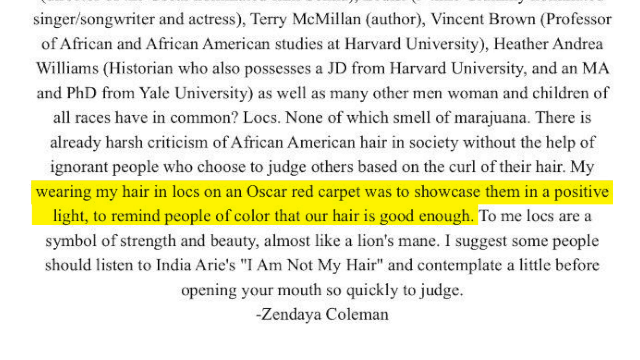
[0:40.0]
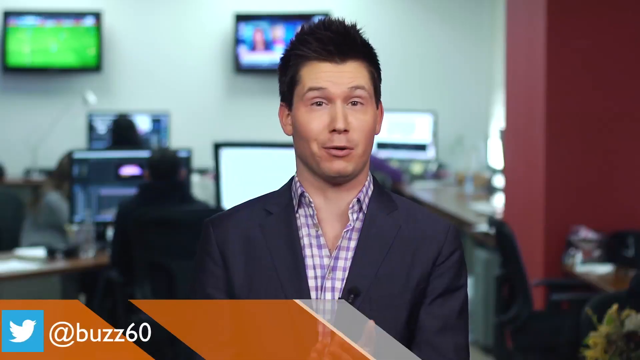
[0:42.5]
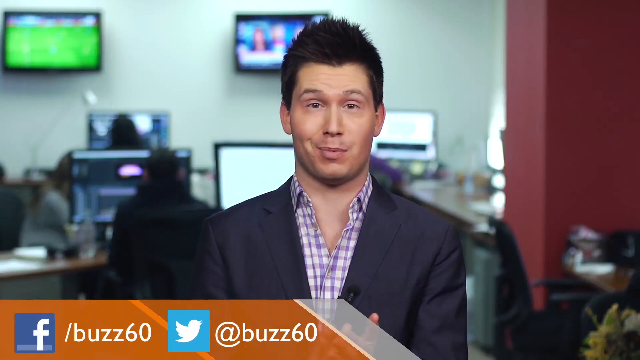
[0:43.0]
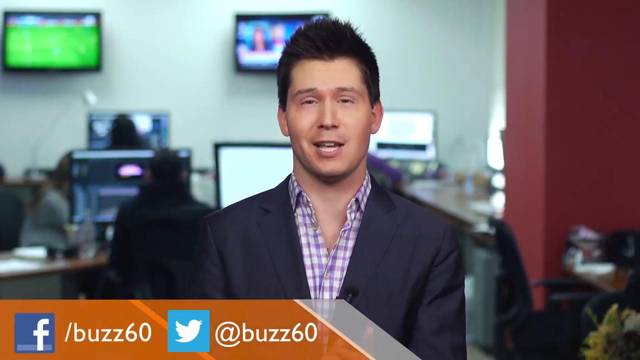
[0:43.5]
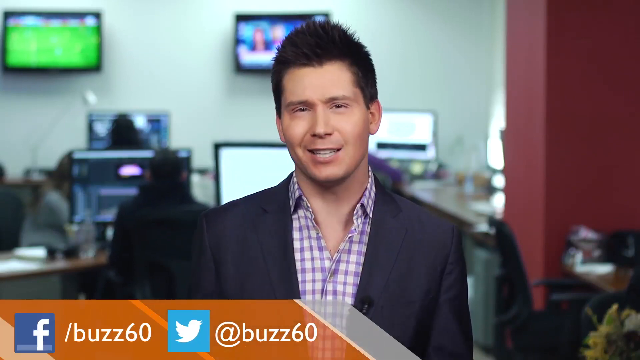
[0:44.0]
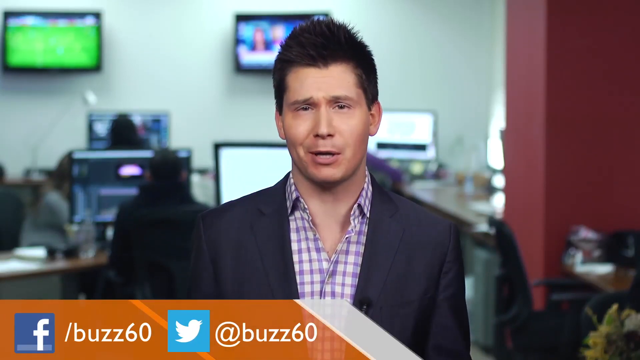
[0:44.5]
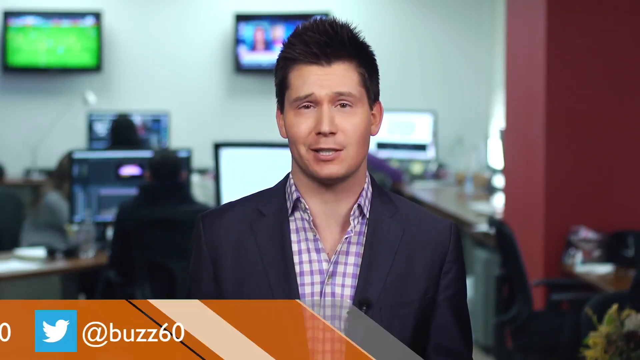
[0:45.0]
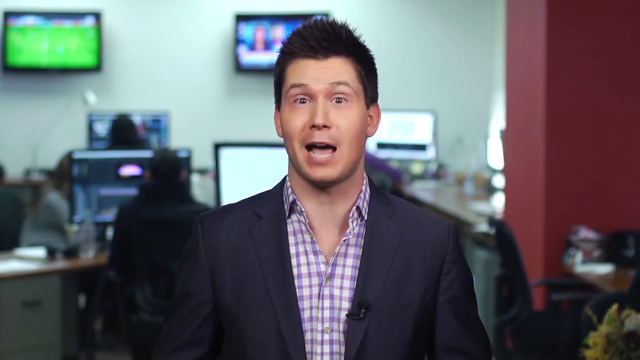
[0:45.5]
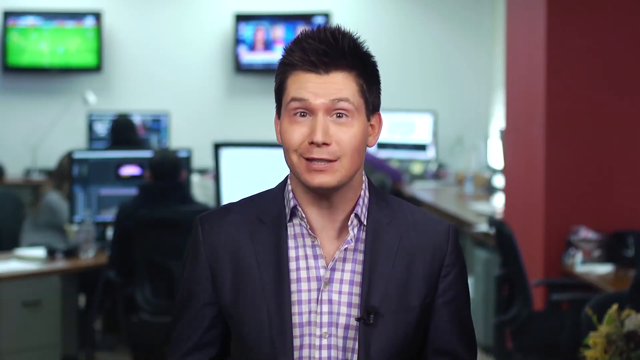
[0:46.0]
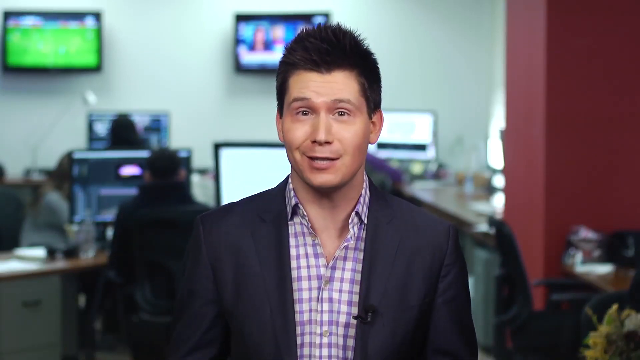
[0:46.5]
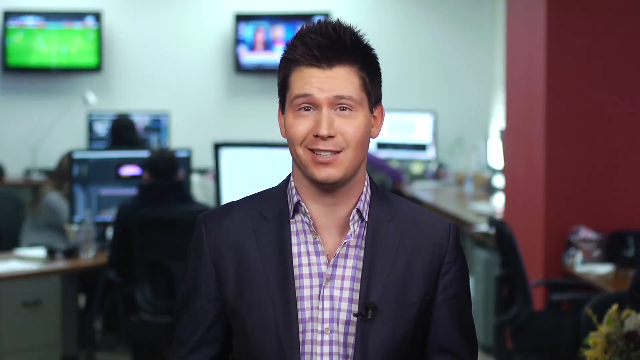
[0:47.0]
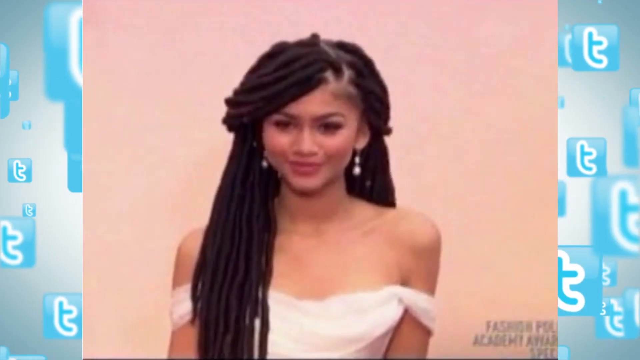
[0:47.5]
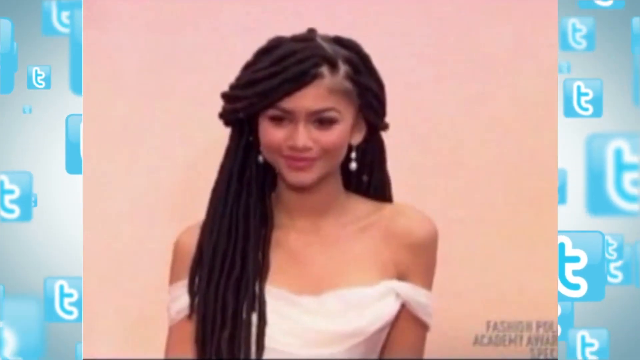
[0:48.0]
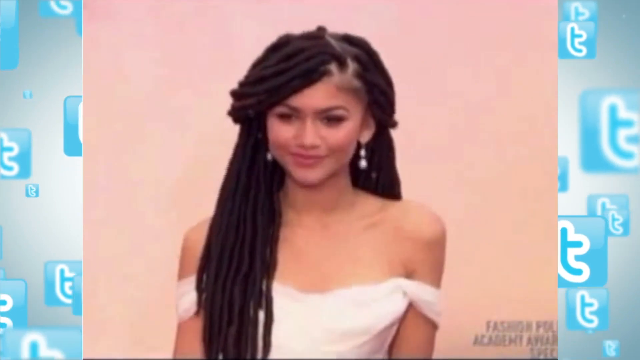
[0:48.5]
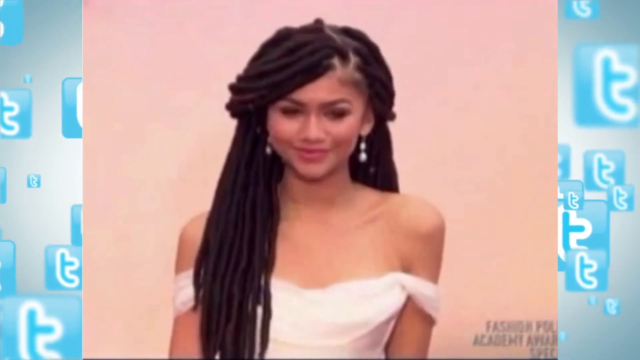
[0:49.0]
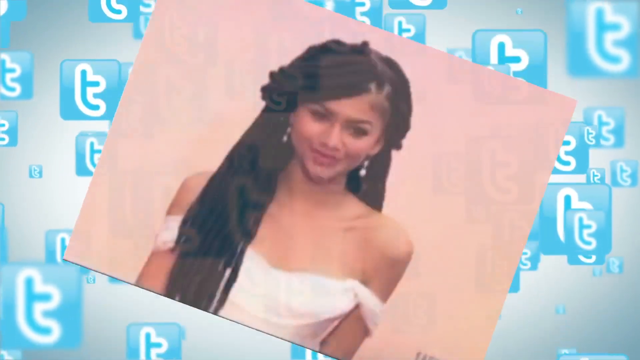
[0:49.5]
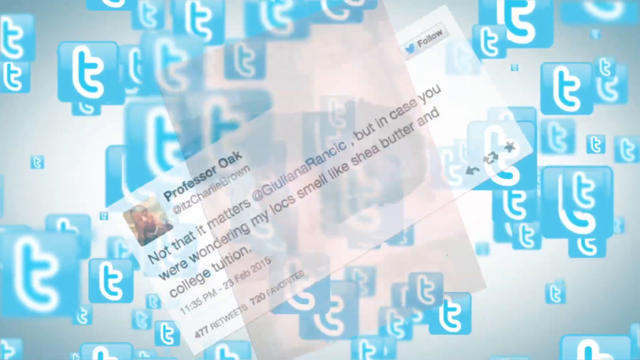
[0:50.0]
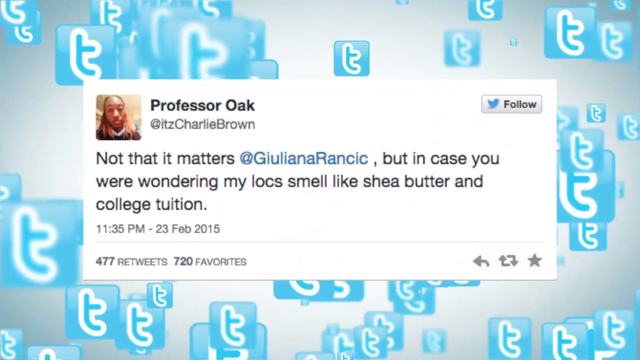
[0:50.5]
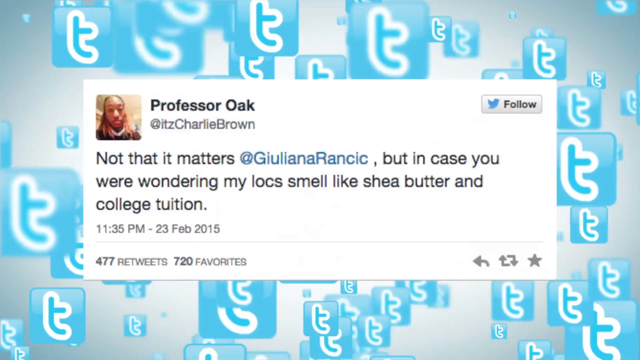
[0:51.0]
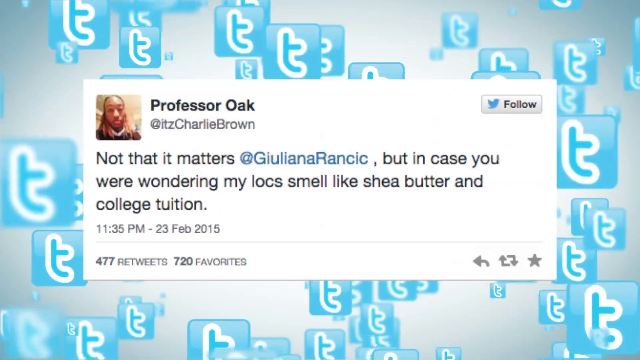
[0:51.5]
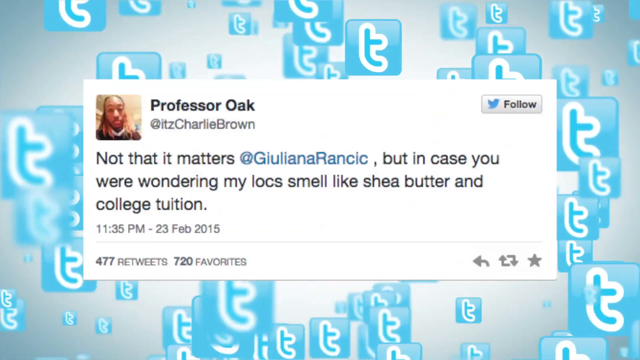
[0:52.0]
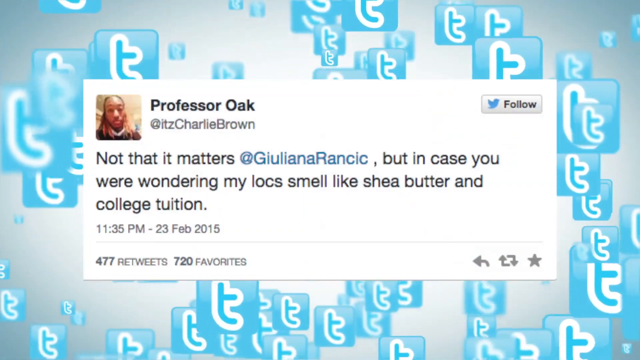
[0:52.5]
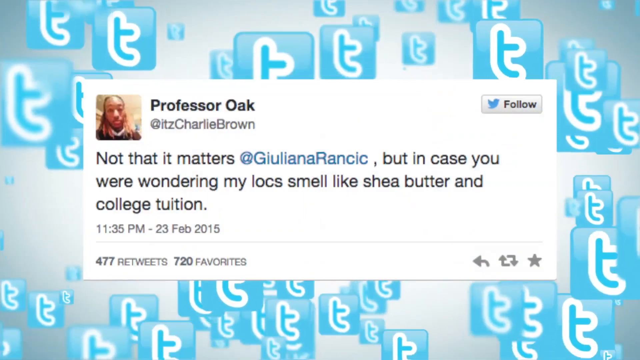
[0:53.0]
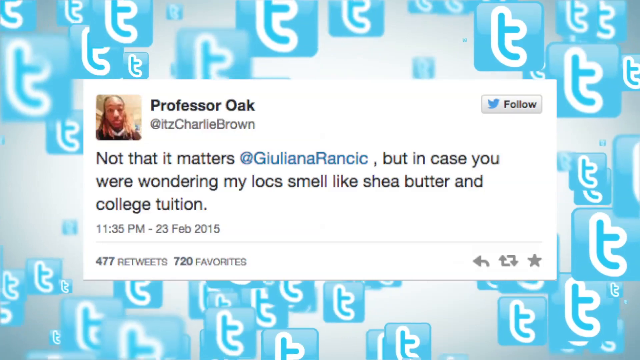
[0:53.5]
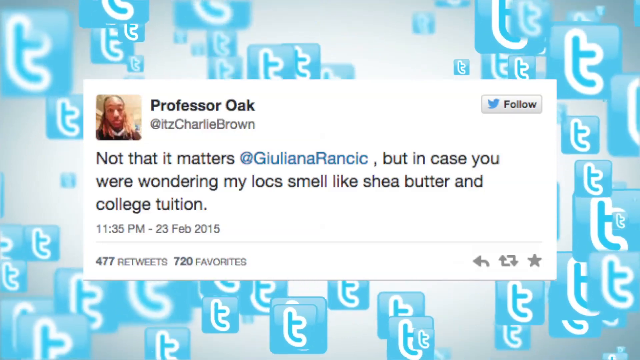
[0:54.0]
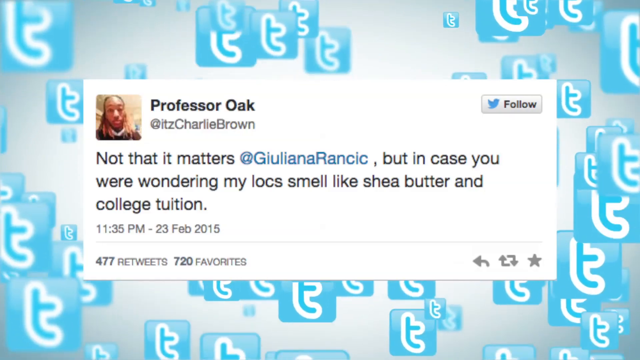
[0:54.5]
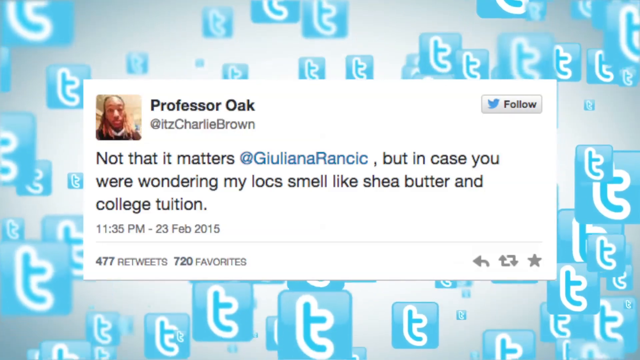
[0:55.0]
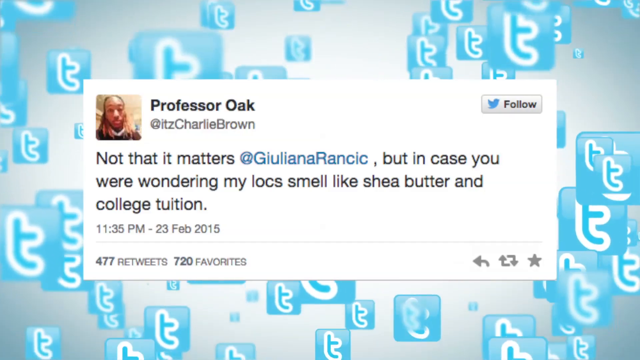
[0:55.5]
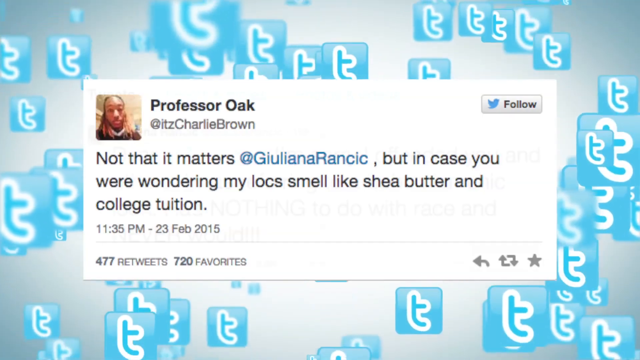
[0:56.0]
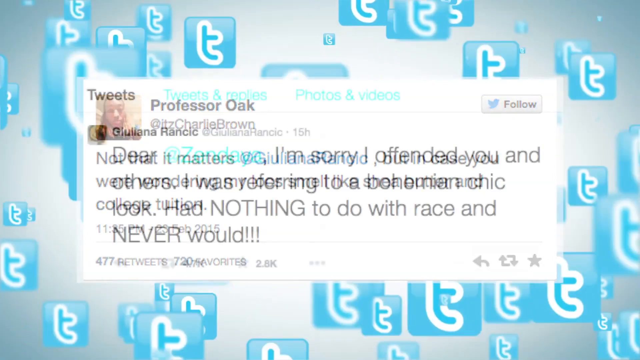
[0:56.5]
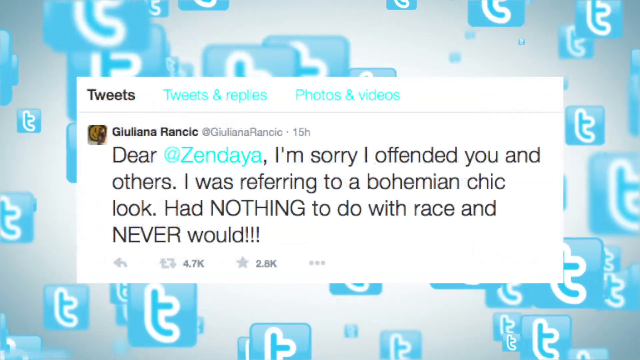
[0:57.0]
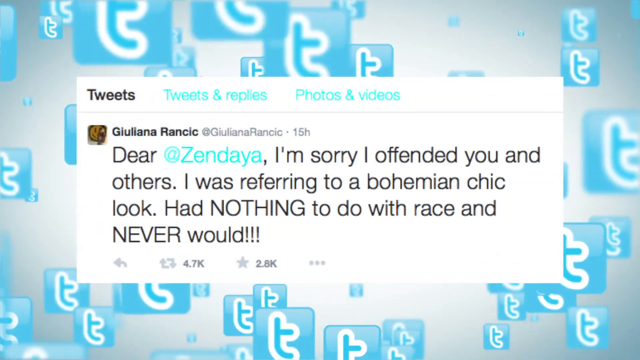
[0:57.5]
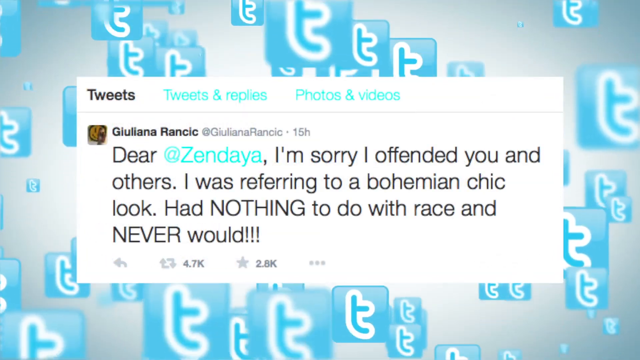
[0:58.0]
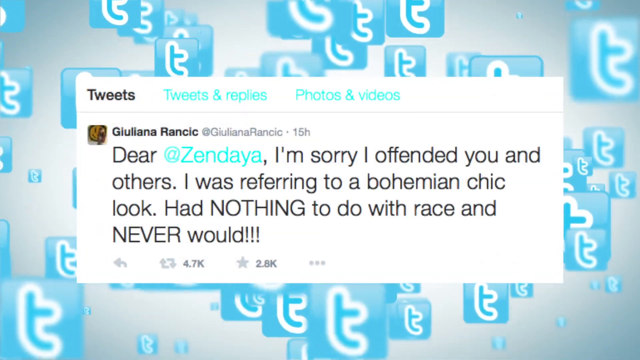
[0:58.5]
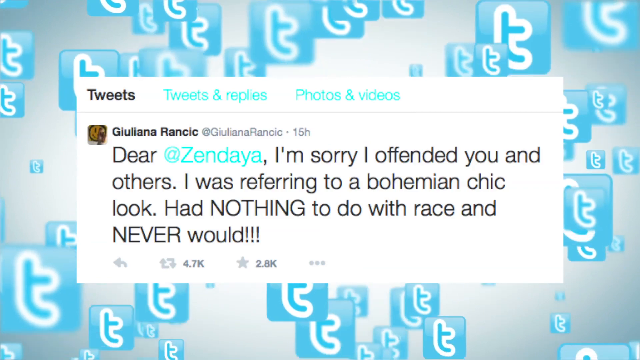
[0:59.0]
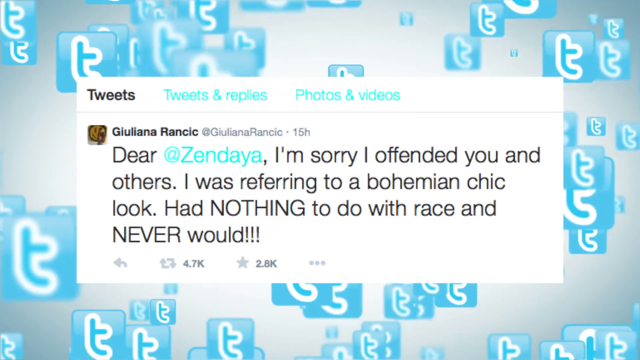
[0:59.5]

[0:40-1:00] The news reporter is reporting on Buzz 60 about an 18-year-old girl with long locks and people saying her hair smelled of marijuana. A tweet appears that reads, in part, "but in case you were wondering, my locks smell like sheer butter and college tuition." It is dated 11.35 PM, 23rd February 2015, with 477 retweets and 720 favorites.